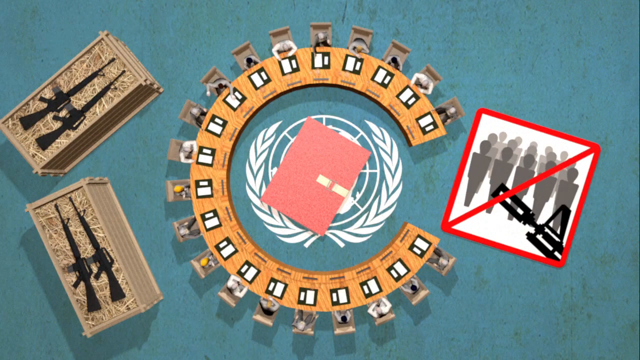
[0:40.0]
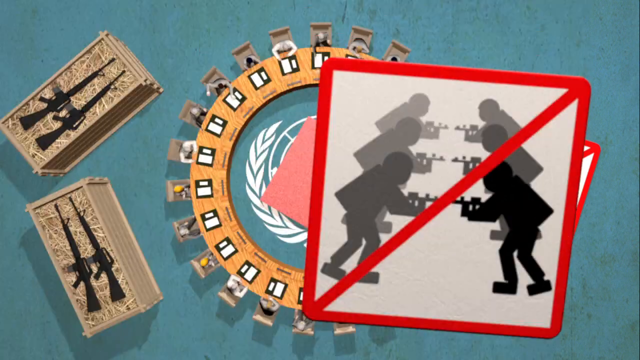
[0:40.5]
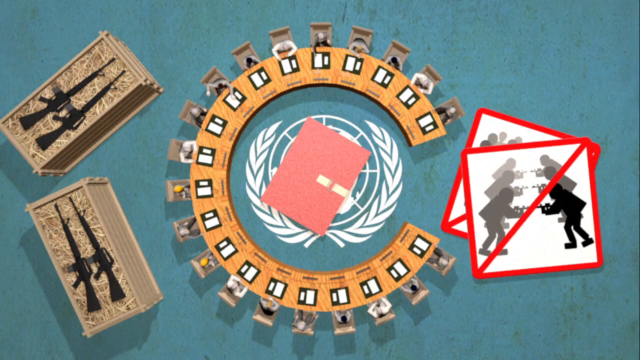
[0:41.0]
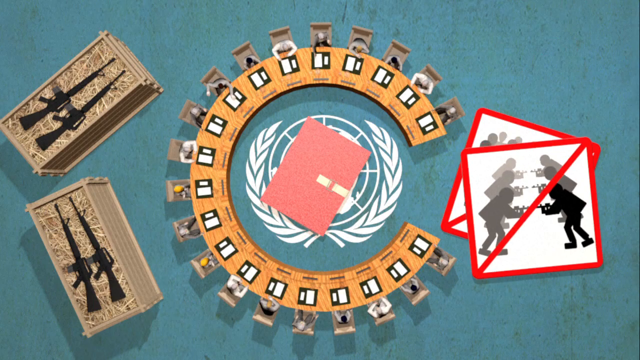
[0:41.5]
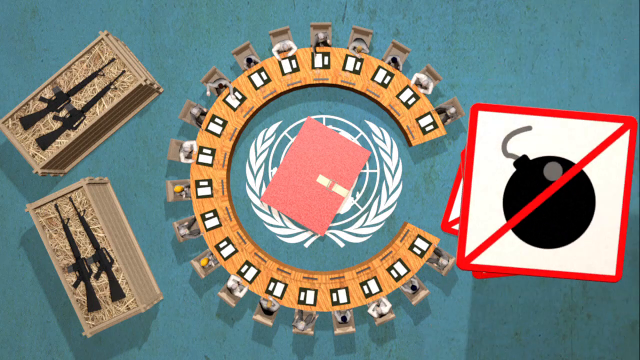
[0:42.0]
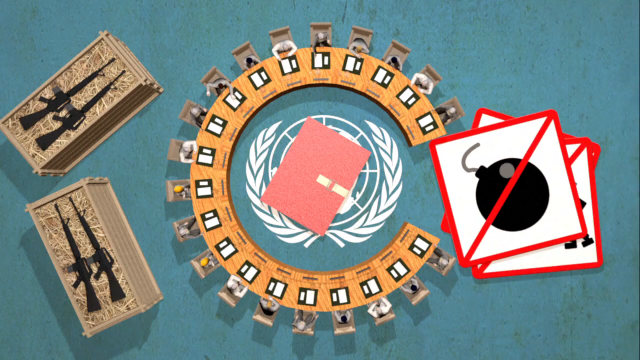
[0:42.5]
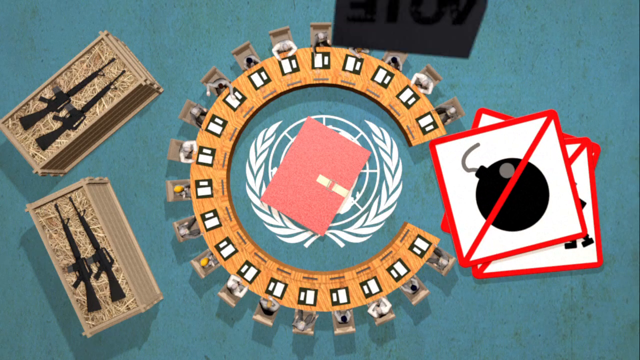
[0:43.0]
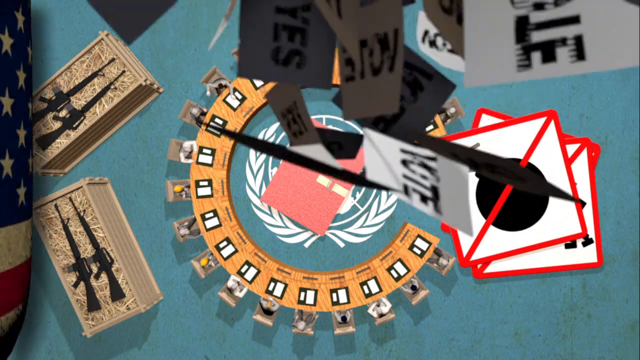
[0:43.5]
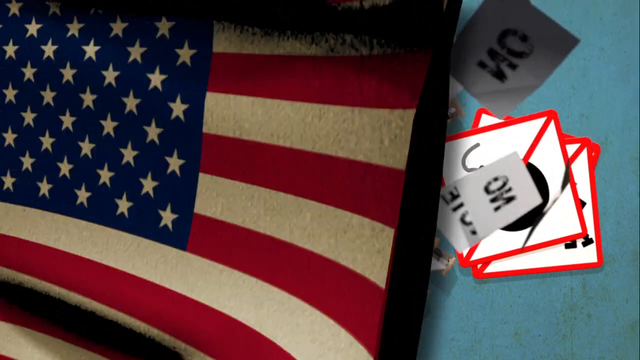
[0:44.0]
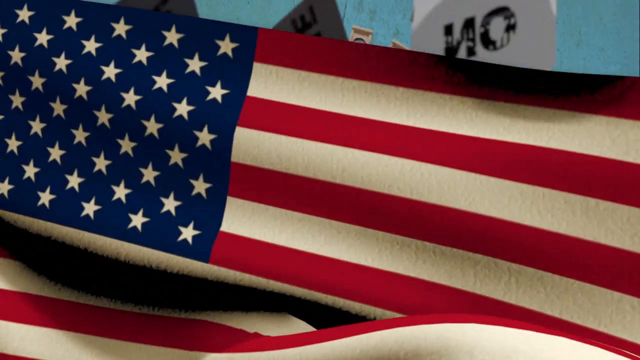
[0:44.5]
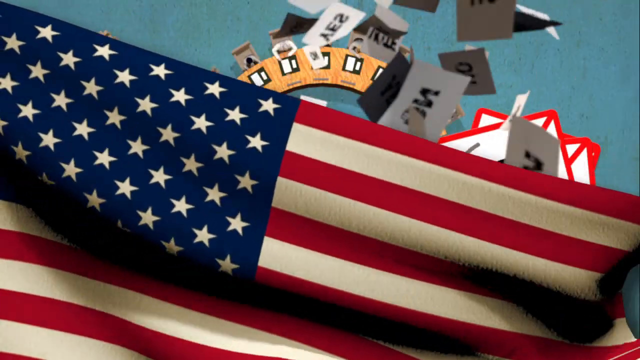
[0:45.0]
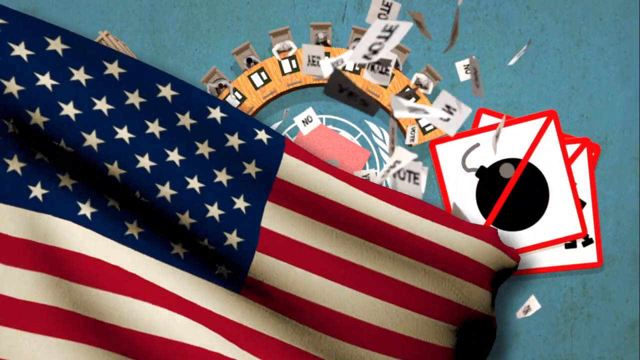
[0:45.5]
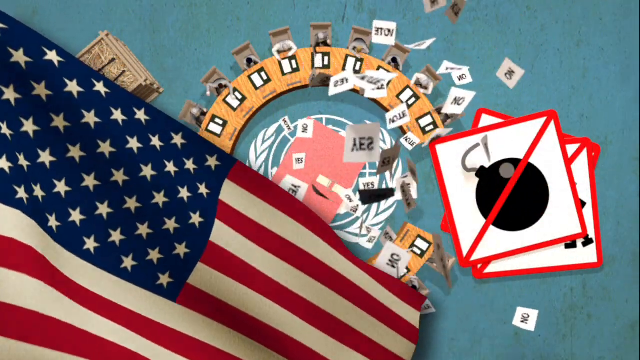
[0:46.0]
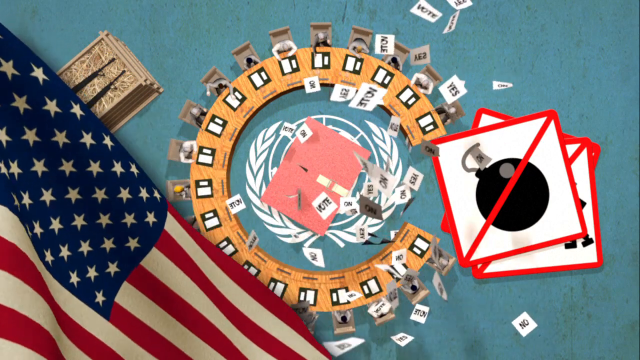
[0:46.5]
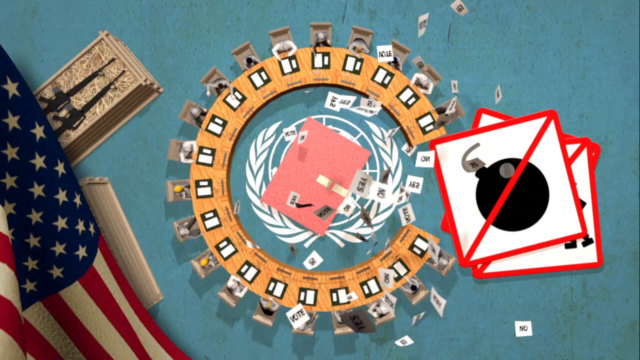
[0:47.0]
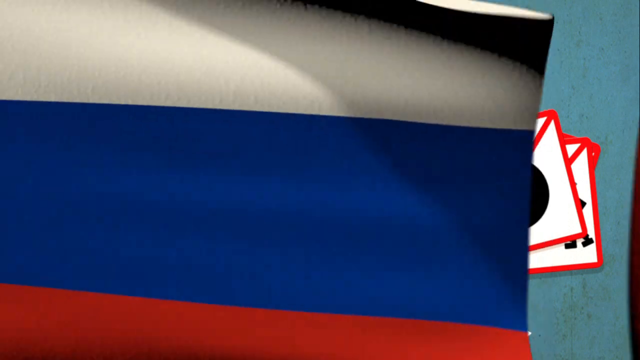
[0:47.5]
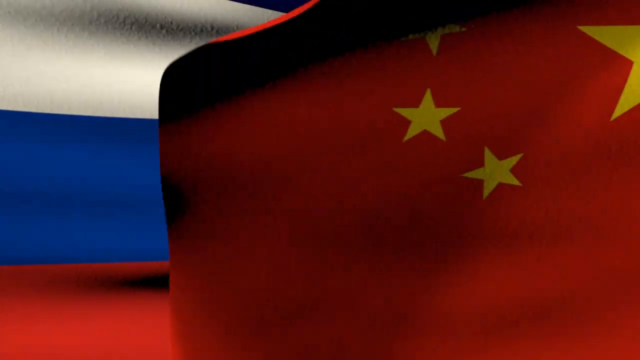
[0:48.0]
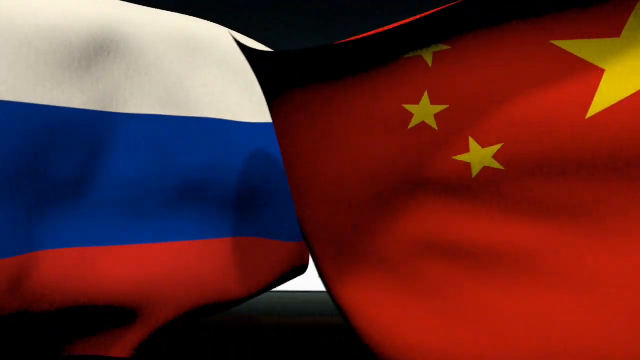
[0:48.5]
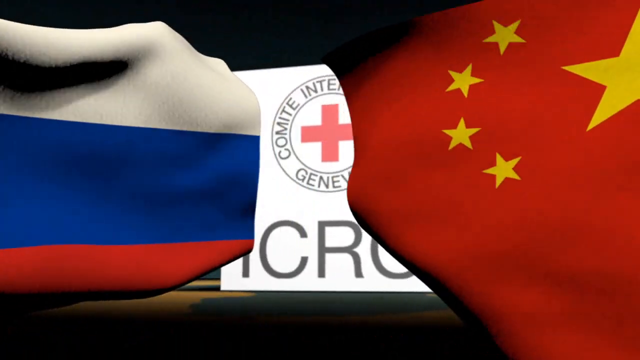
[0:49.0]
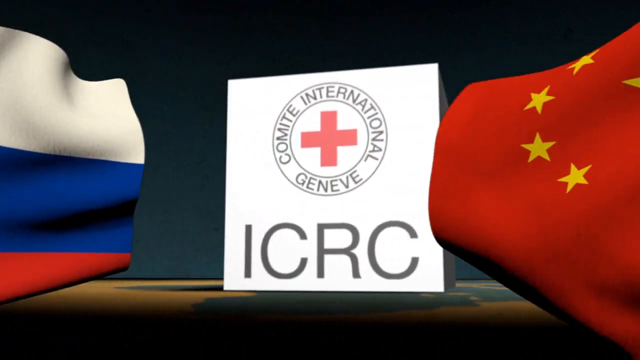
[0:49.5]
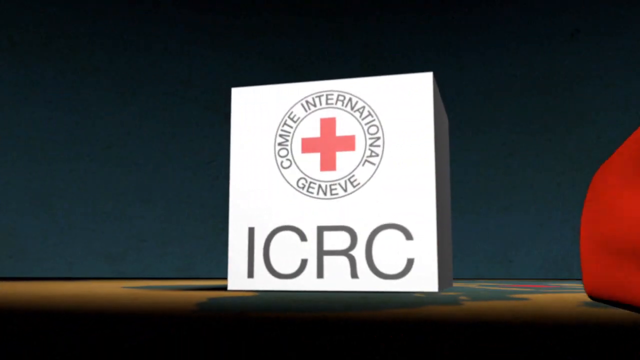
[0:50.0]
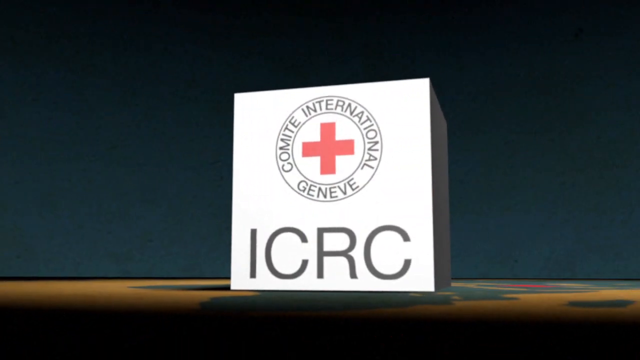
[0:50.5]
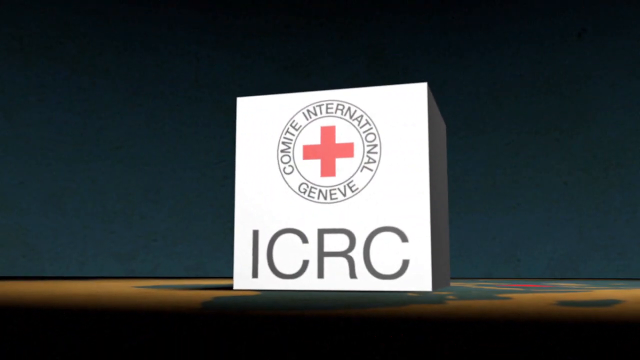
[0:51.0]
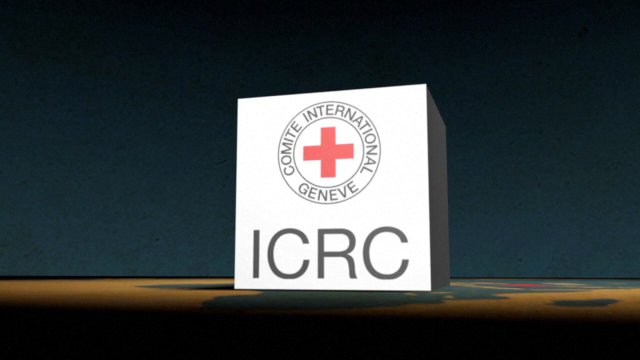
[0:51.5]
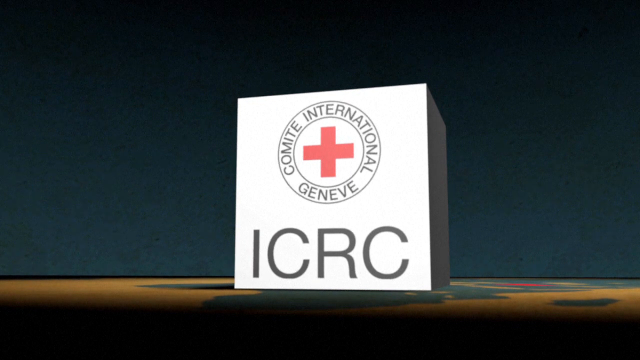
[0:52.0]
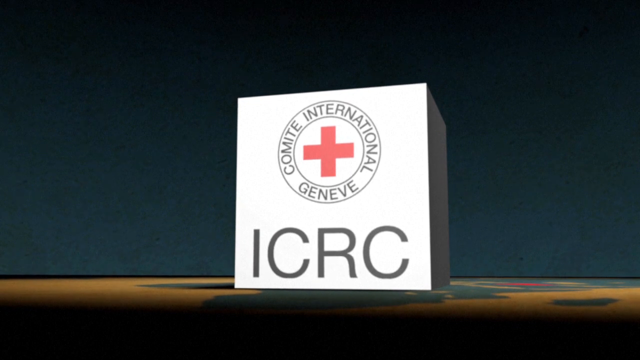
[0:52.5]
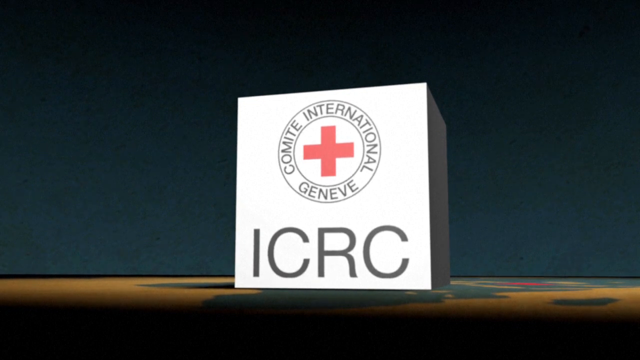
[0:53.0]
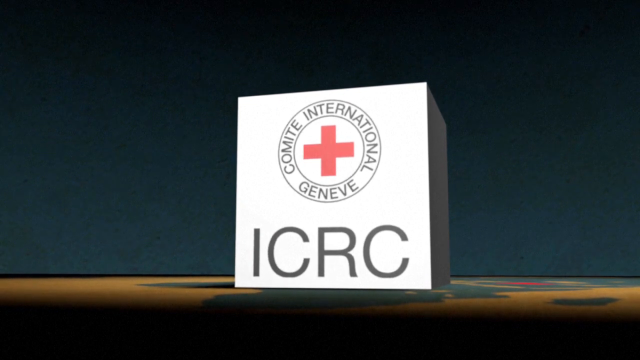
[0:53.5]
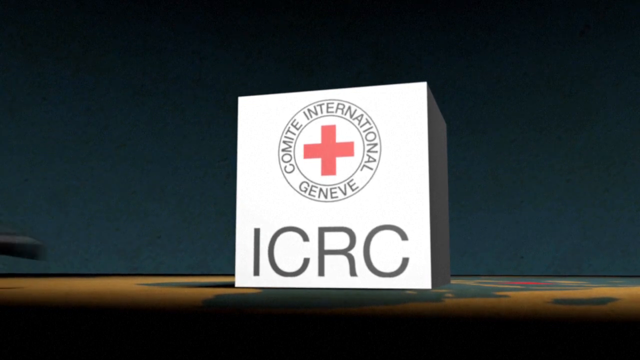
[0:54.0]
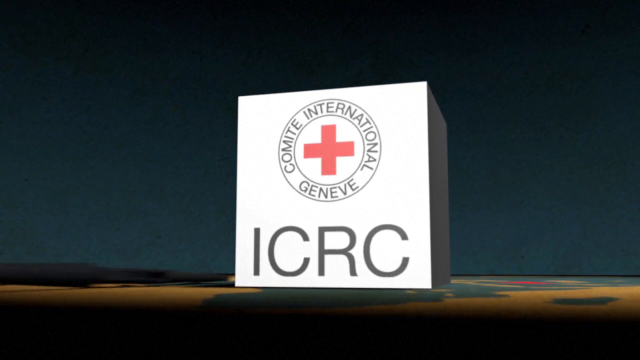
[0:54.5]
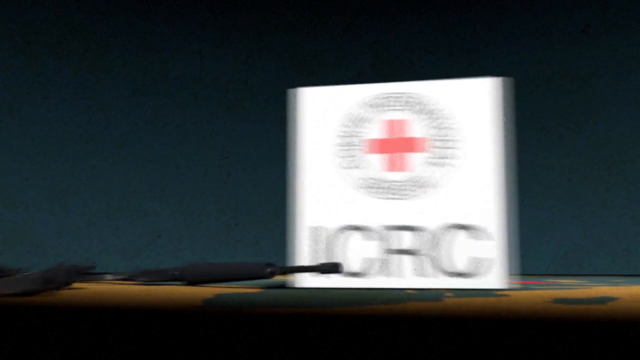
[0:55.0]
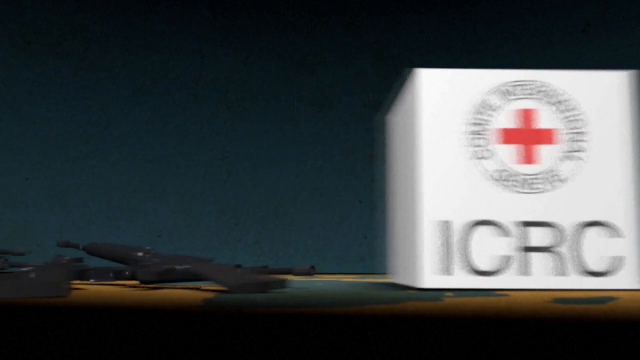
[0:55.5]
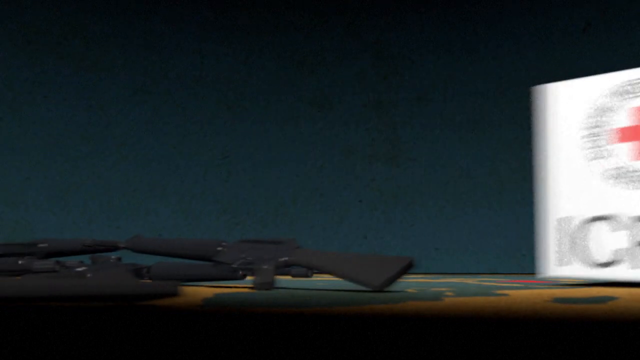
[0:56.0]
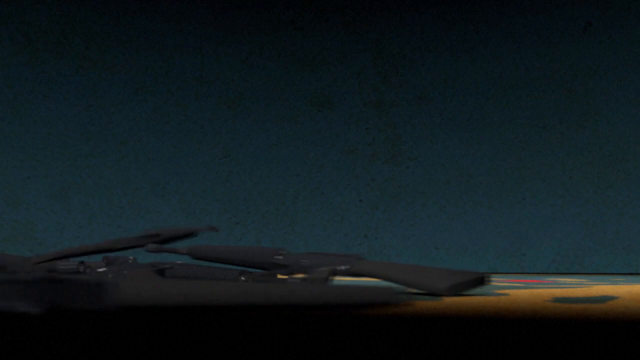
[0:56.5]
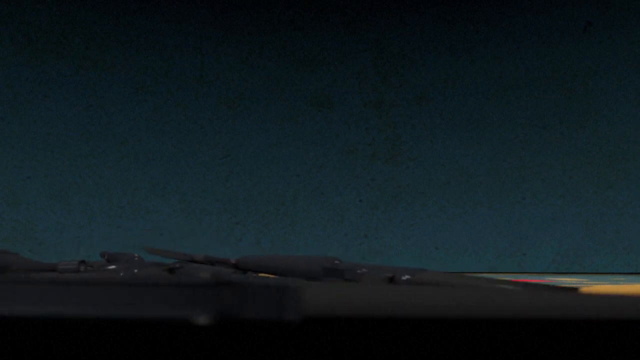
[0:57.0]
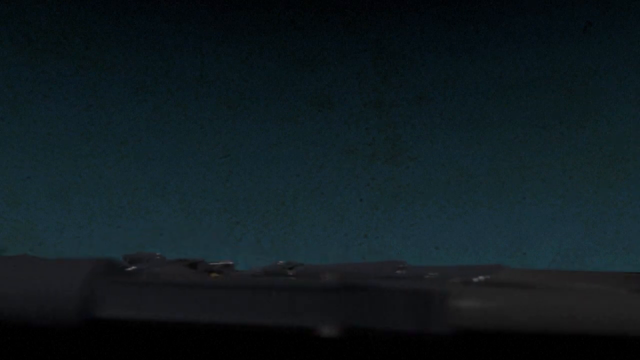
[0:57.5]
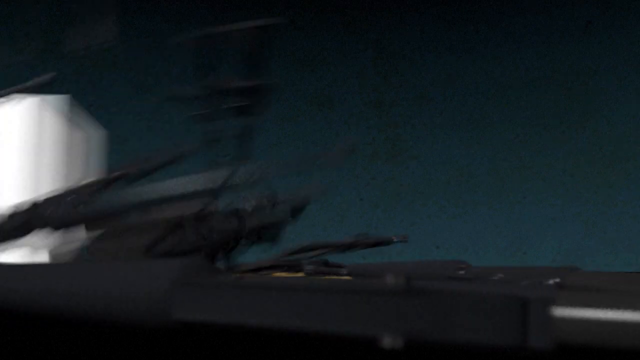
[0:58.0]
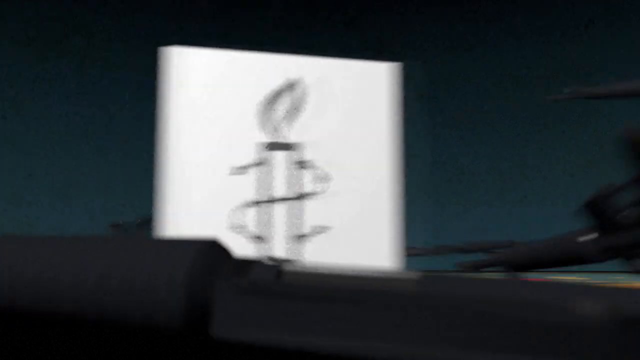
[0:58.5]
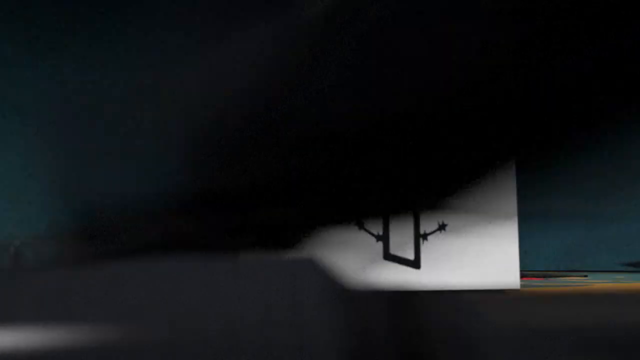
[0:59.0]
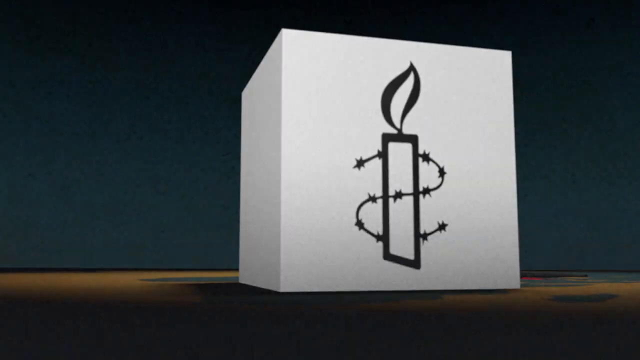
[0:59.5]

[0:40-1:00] What looks like the United Nations logo has a blue book on top of it, and around it there seems to be a semi-circle that is also a press conference table with a wooden, brown color, with people sitting on gray chairs around it. On one side are two crates, each with two black rifles on top. On the right side are silhouettes of people pointing guns at each other, with a red line going diagonally from the lower left corner to the right corner of the box. Then another white square shows a picture of a bomb, also with a red line going diagonally from left to right. What look like pieces of paper with black text on them fly down from the sky onto the press conference table. Meanwhile an American flag is draped across the screen, followed by the Russian flag on the left and the Chinese flag on the right. As they pass through the screen, a logo with a red cross appears in the background, with black text underneath that says "ICRC".